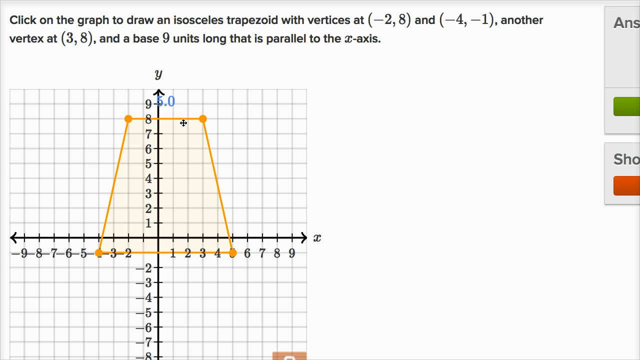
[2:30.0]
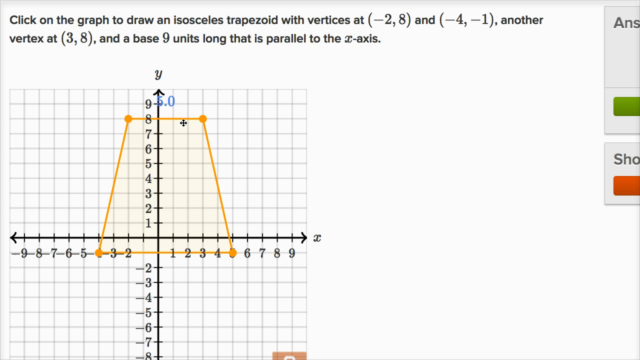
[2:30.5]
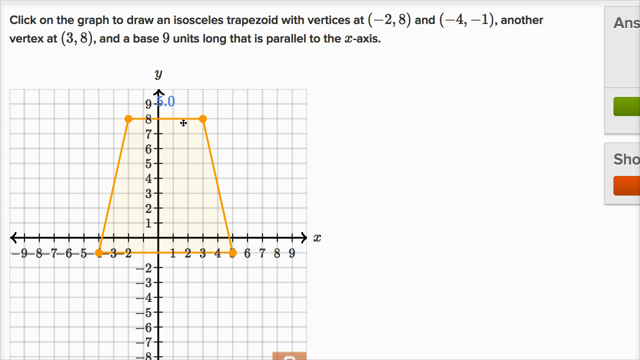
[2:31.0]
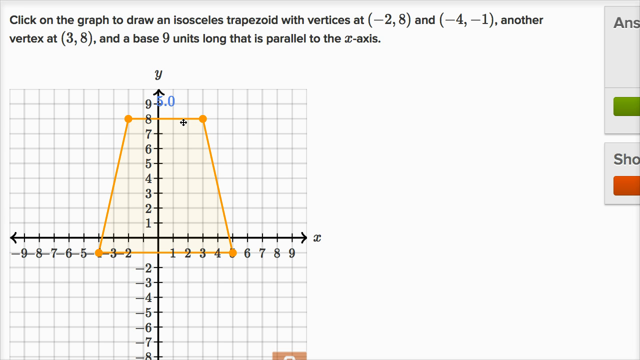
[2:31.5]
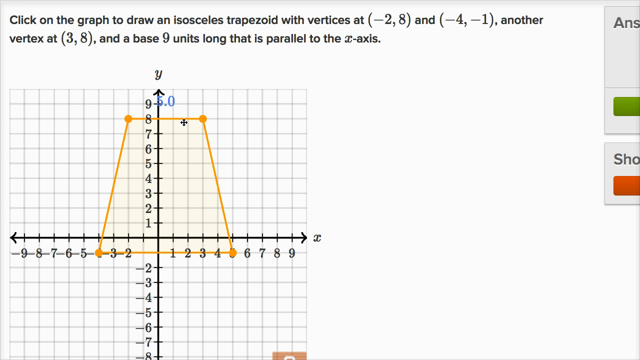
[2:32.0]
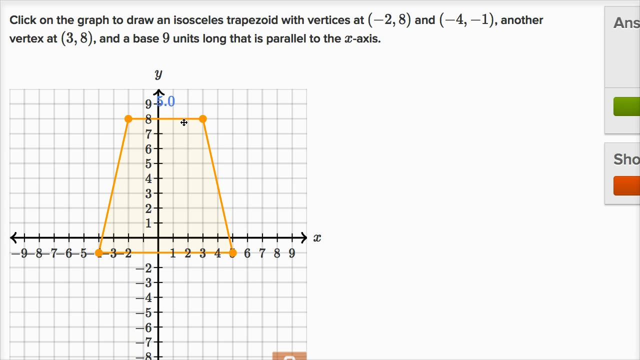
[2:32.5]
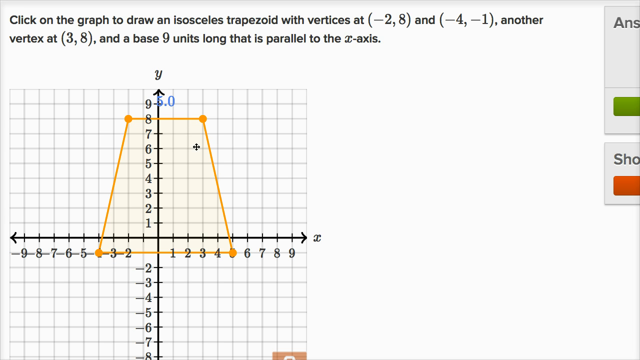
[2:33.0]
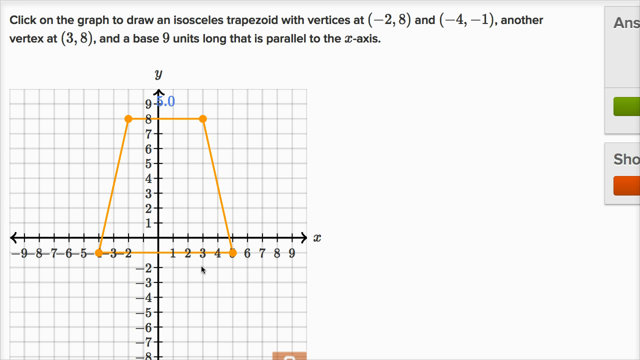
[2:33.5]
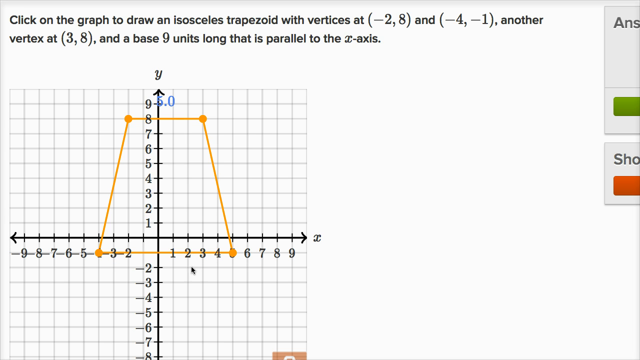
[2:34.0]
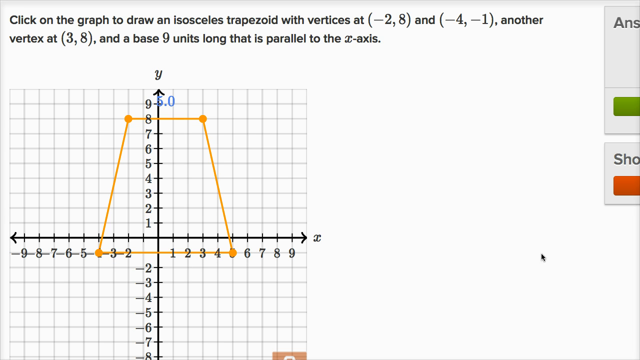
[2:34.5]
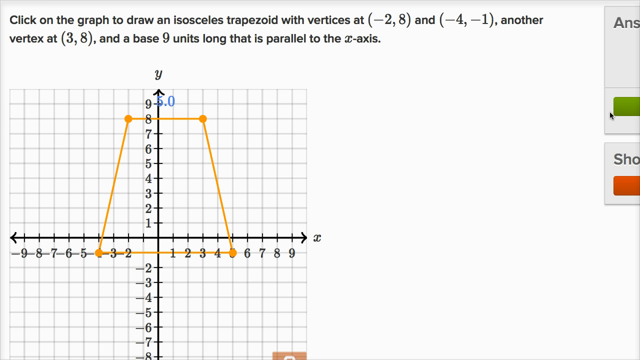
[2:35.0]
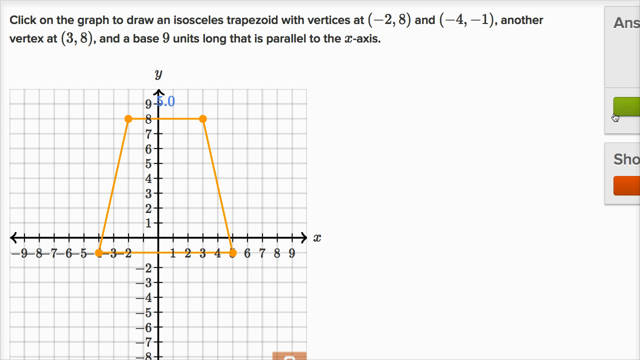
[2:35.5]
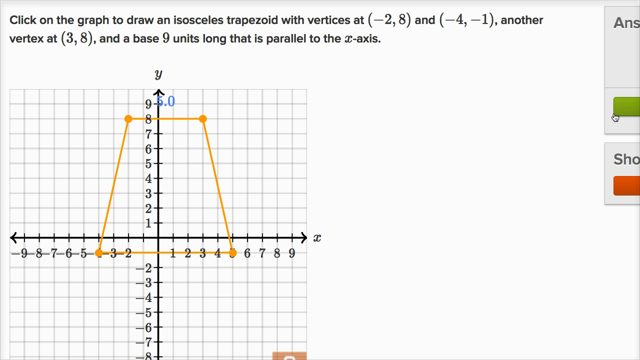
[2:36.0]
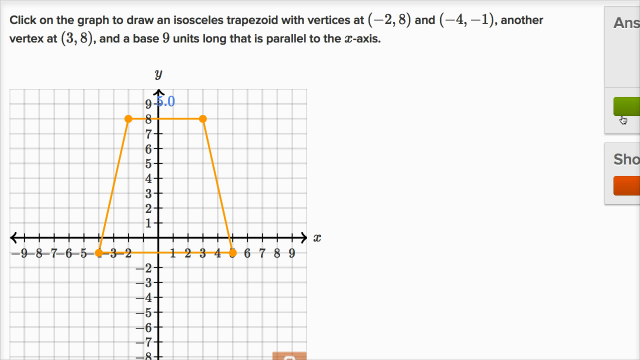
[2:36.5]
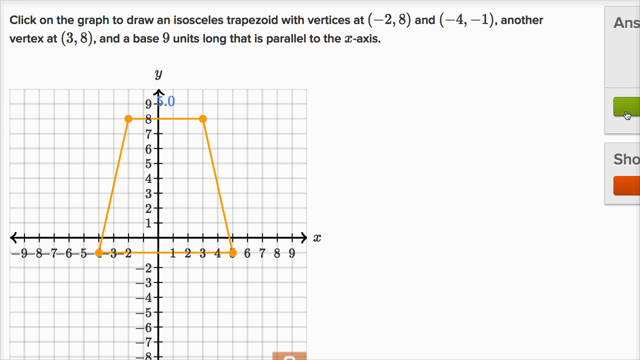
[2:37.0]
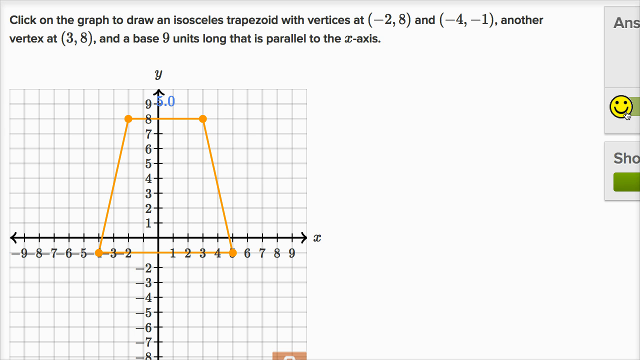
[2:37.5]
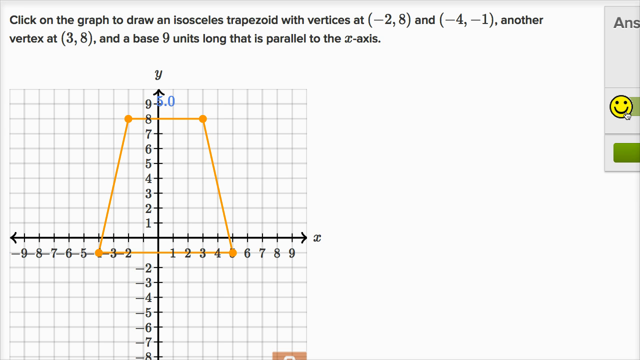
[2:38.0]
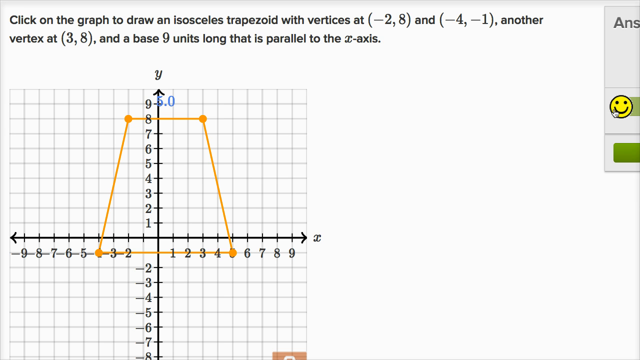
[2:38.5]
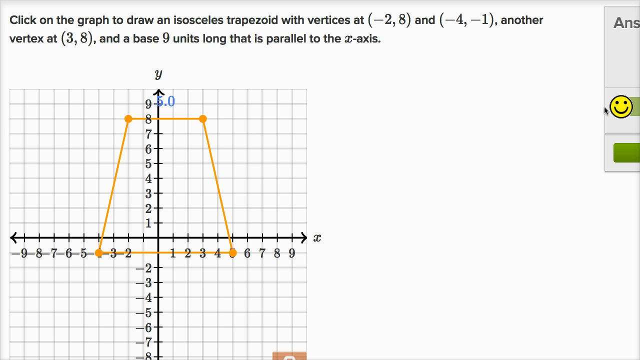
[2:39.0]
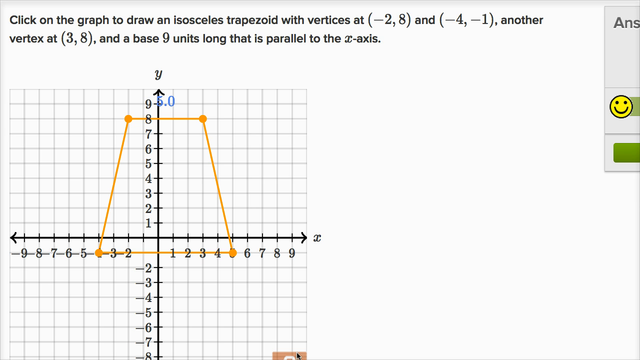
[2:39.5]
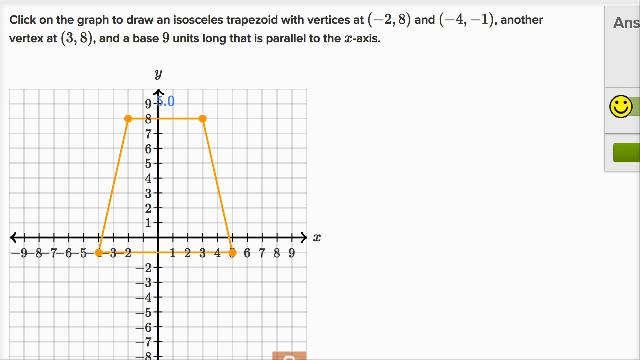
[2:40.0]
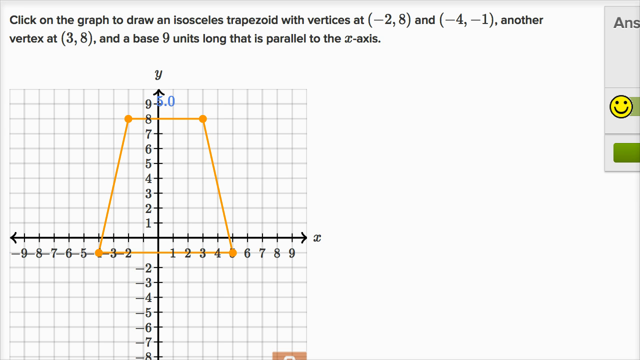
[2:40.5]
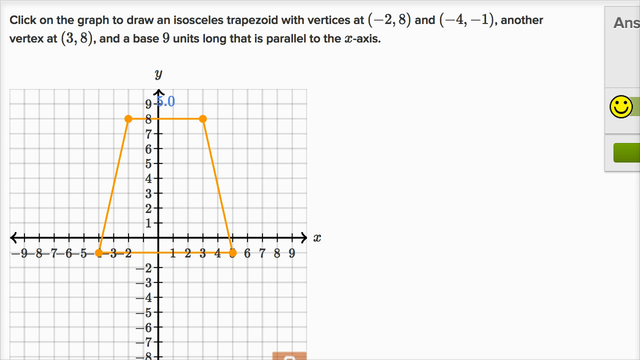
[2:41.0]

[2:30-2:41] The completed graph is shown with the shape drawn with its vertices, made with simple strokes. Its base line is parallel to the x-axis.